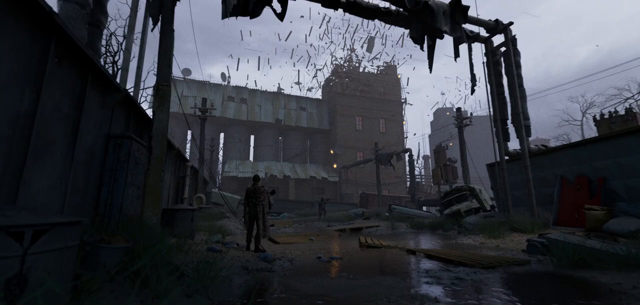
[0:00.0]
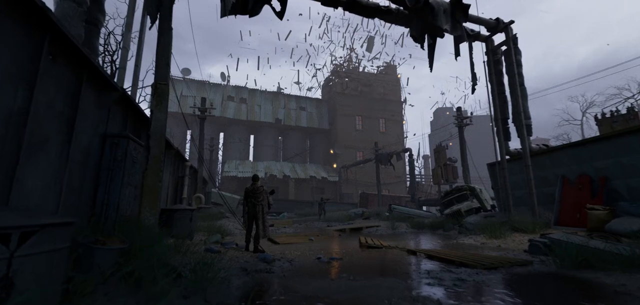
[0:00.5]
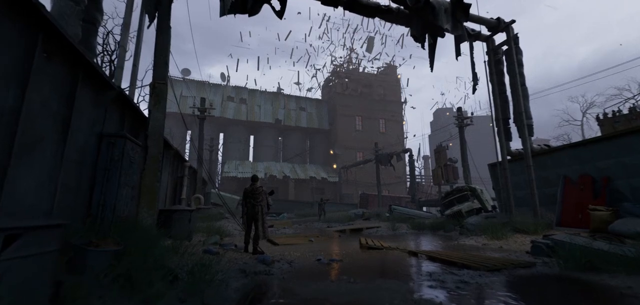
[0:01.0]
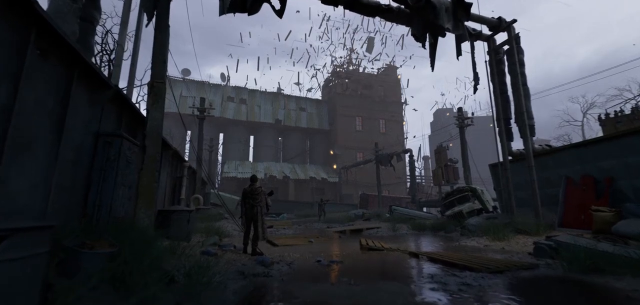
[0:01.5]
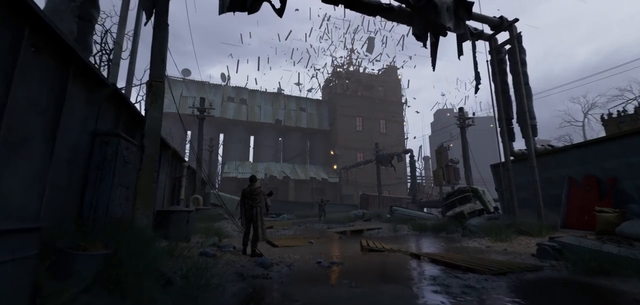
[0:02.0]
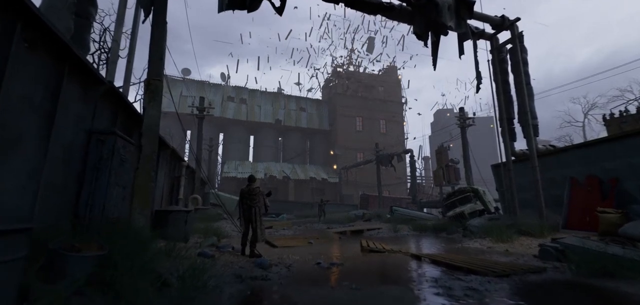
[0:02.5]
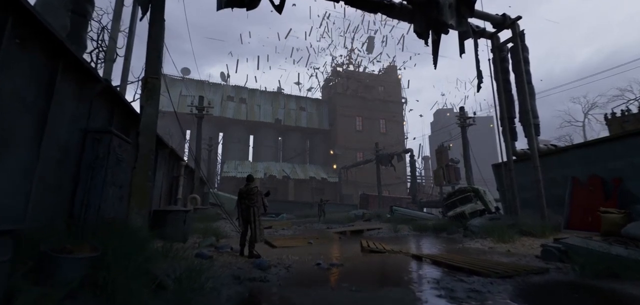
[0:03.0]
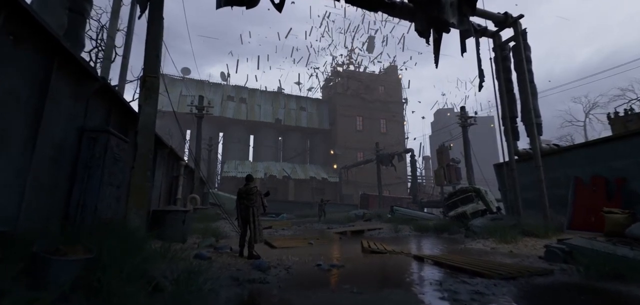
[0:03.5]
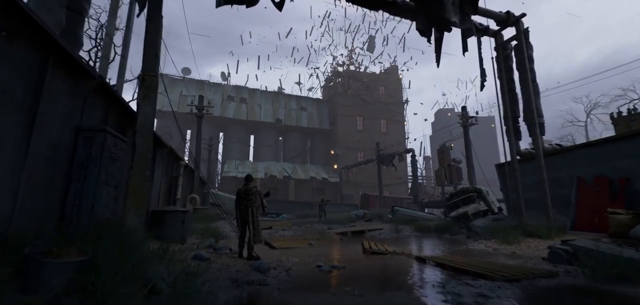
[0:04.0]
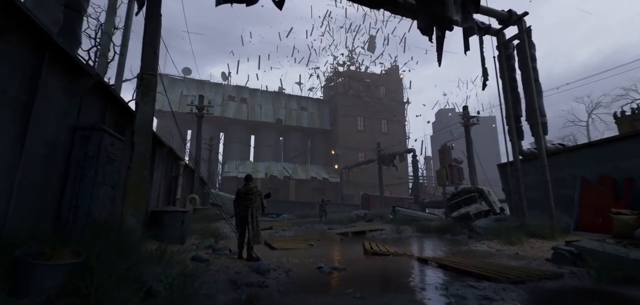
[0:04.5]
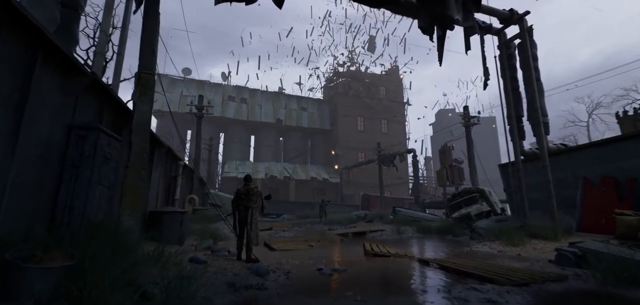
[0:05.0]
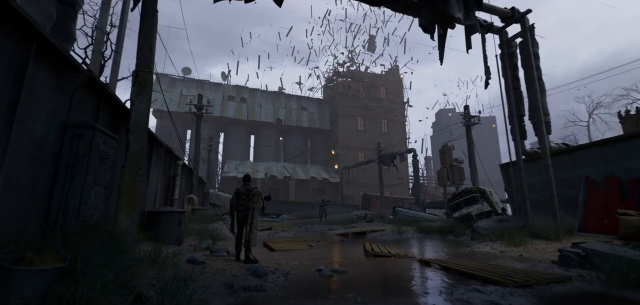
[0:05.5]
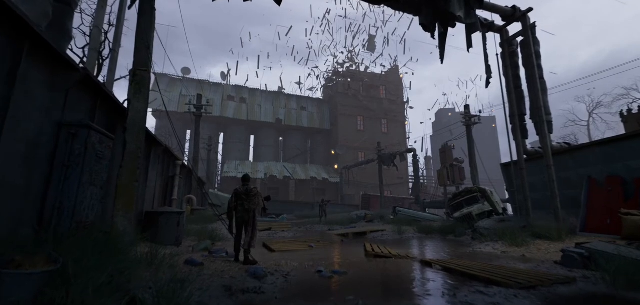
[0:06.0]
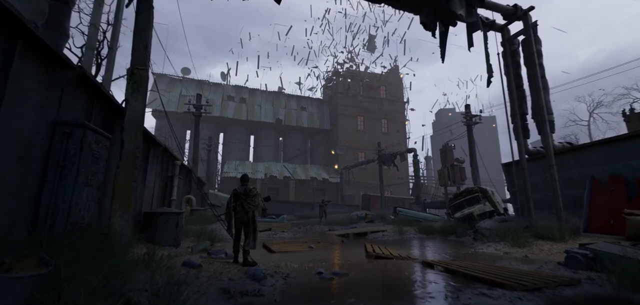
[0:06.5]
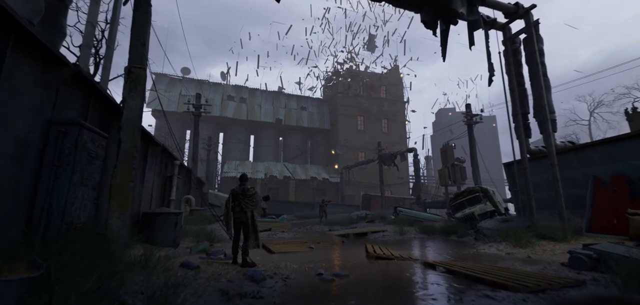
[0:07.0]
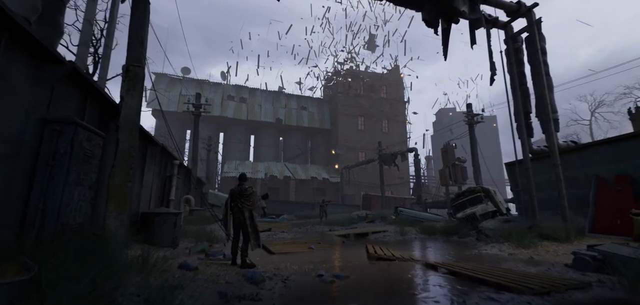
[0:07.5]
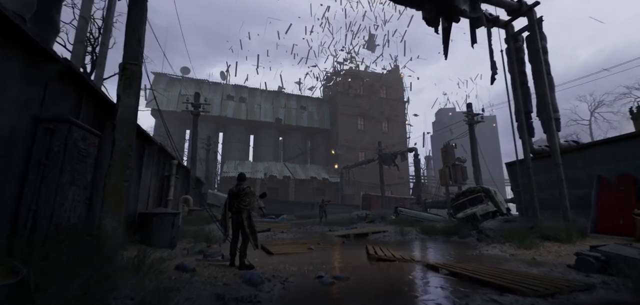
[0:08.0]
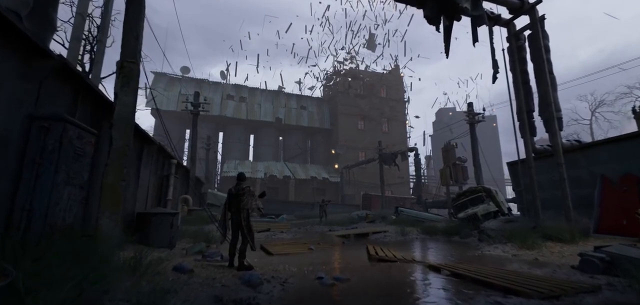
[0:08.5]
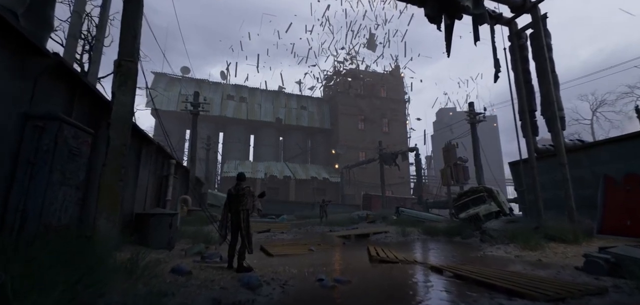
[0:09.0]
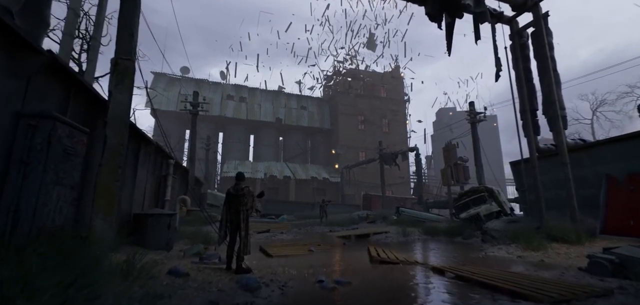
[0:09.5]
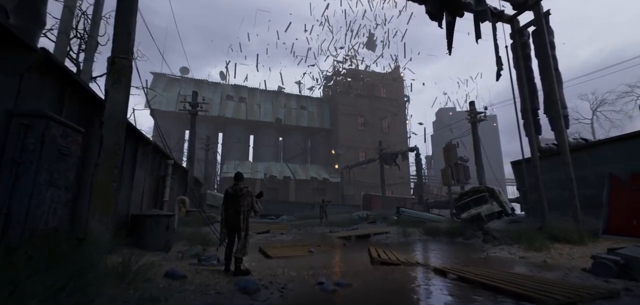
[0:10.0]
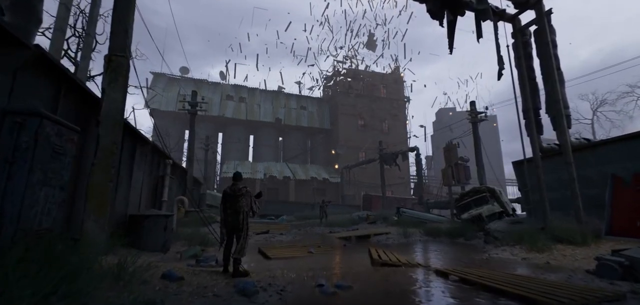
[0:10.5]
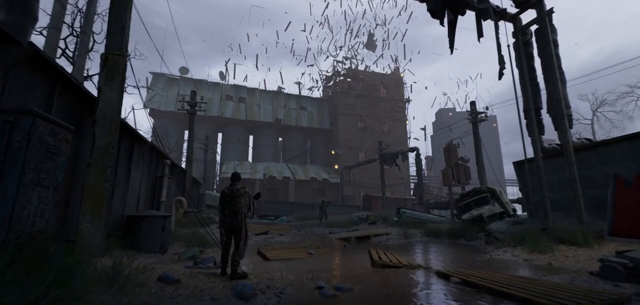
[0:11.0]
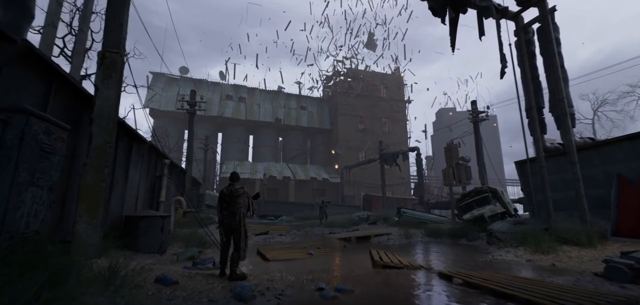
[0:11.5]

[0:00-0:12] A very dark scene that seems to be a still image slowly panning in. In front of the character is some sort of industrial, warehouse-like building, and there seems to be shrapnel and bits coming off of it. The day is very overcast and cloudy. There is a lot of reflection on the floor, suggesting it has probably been raining. The image has very little colour, looking very grey and colourless, with a dark, sombre feel like an end-of-the-world scenario, a sense of sadness that could be apocalyptic. One figure is just standing there, alone.